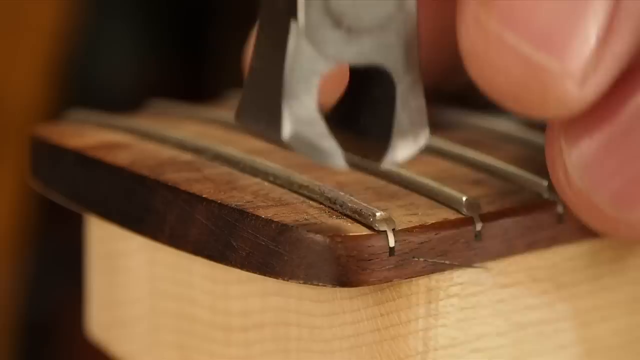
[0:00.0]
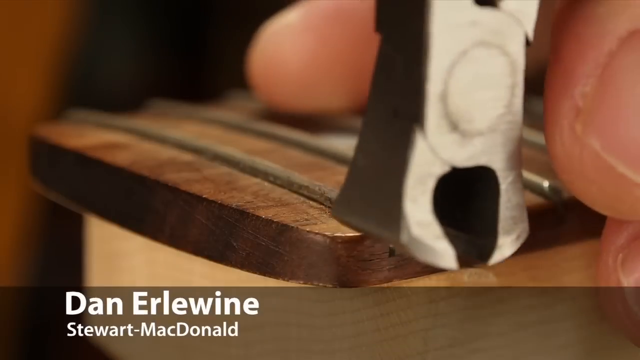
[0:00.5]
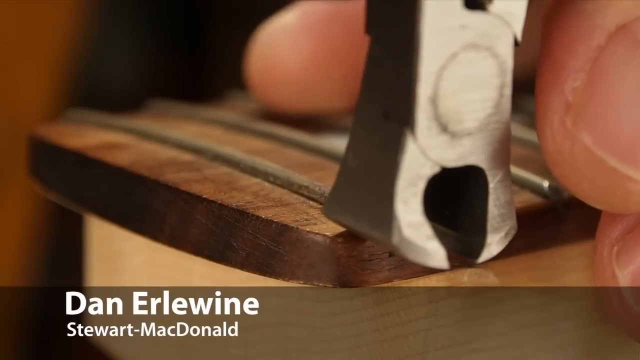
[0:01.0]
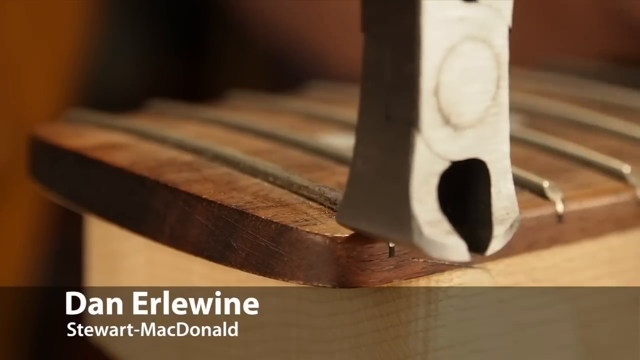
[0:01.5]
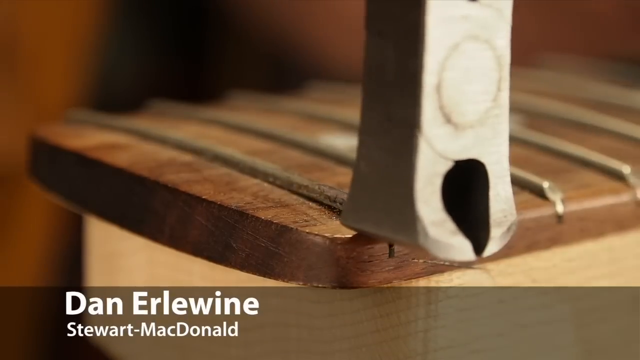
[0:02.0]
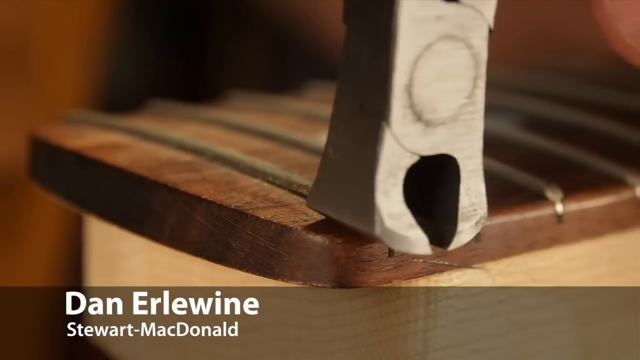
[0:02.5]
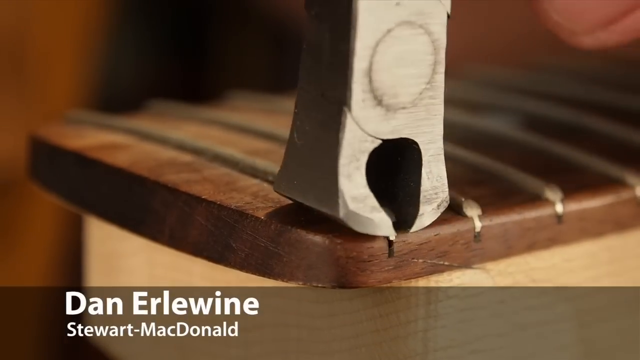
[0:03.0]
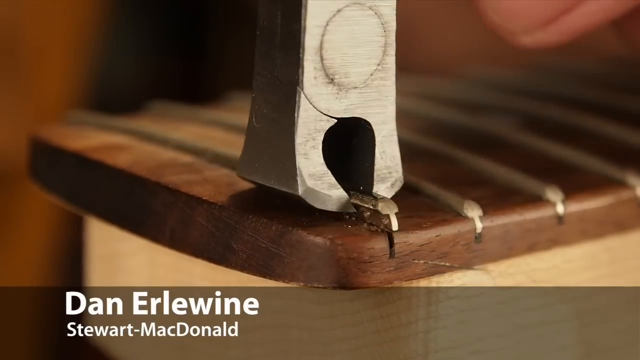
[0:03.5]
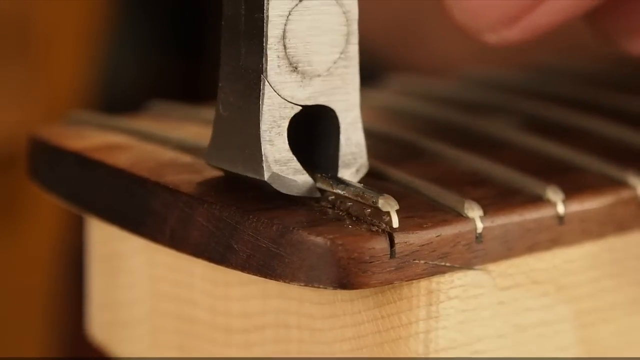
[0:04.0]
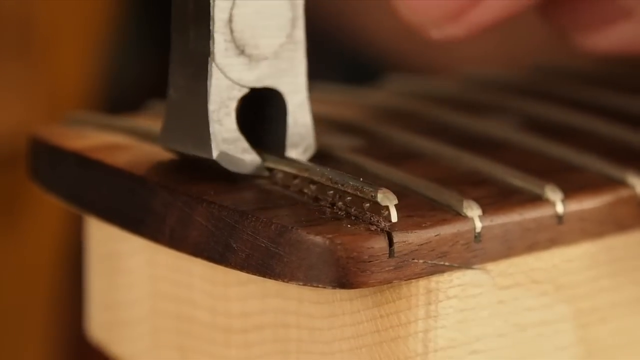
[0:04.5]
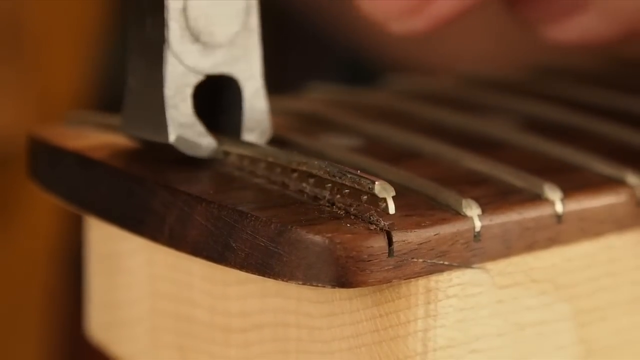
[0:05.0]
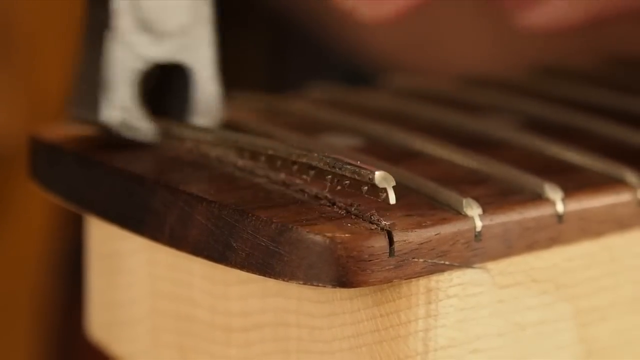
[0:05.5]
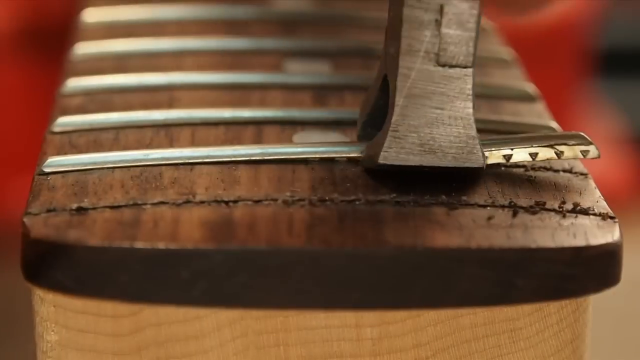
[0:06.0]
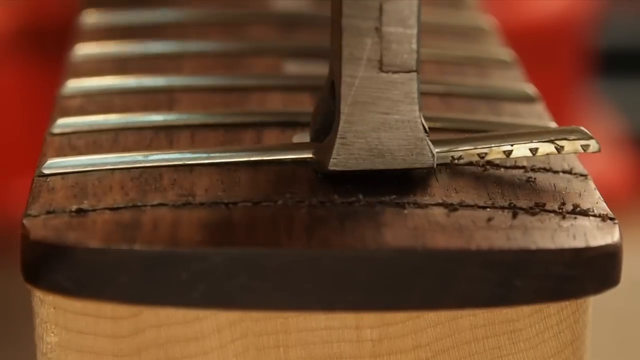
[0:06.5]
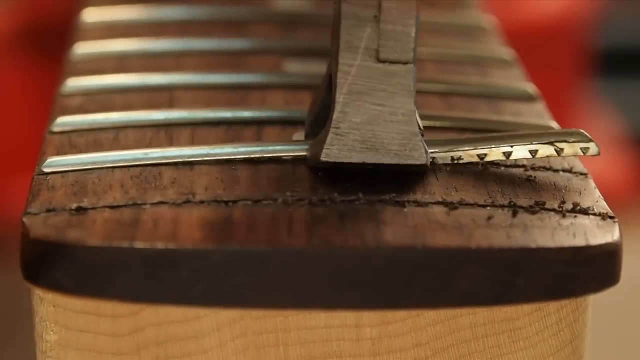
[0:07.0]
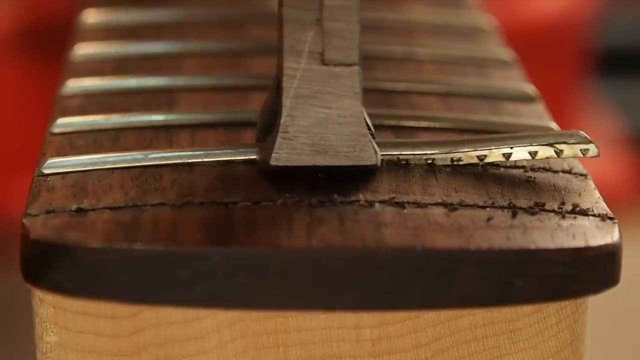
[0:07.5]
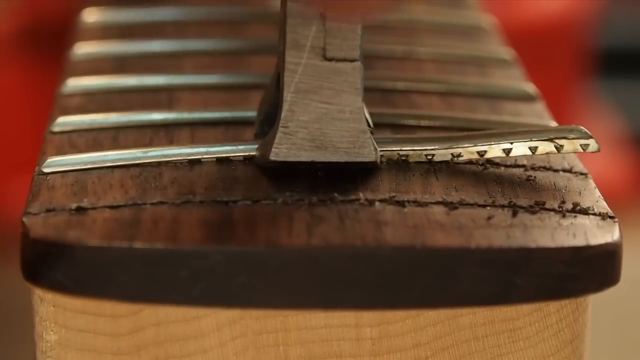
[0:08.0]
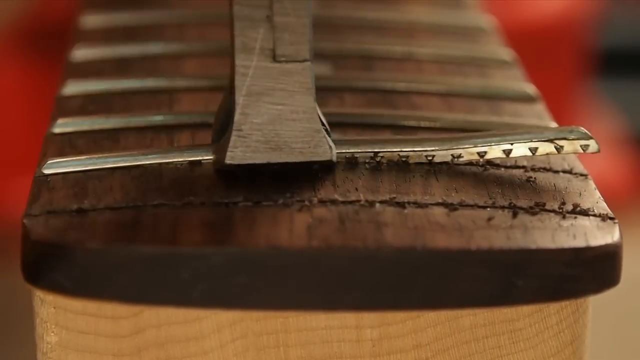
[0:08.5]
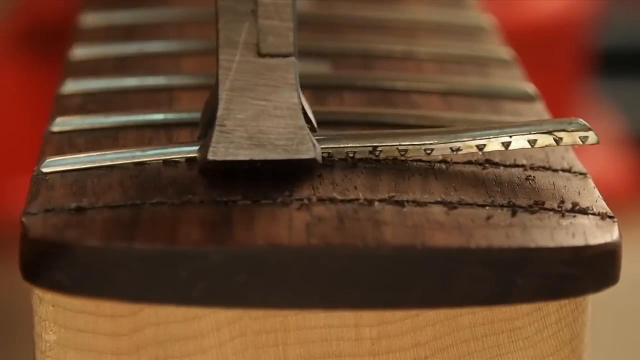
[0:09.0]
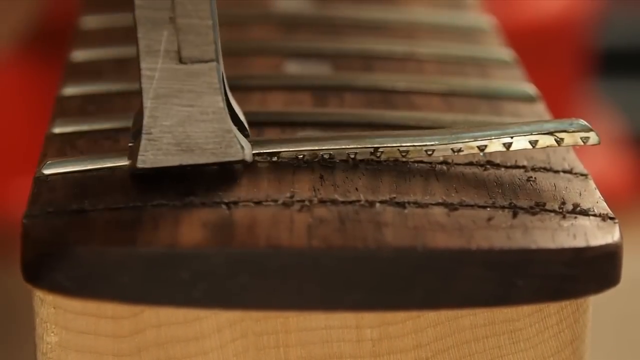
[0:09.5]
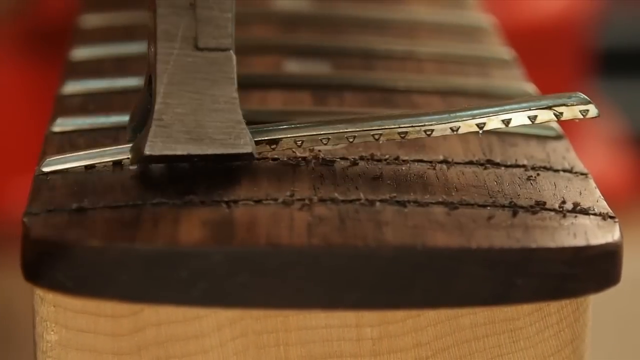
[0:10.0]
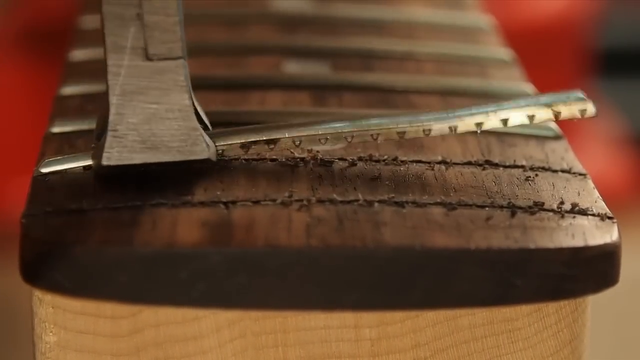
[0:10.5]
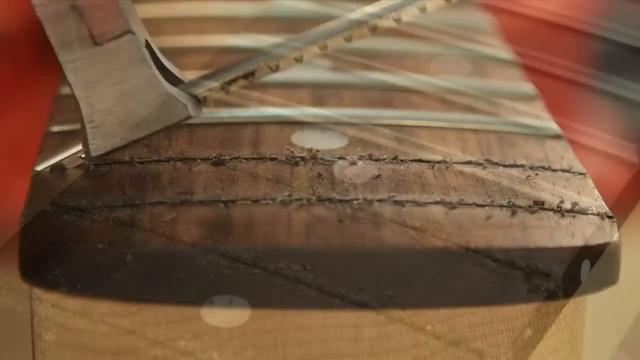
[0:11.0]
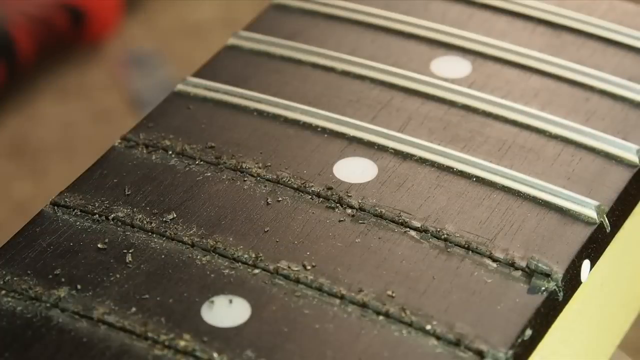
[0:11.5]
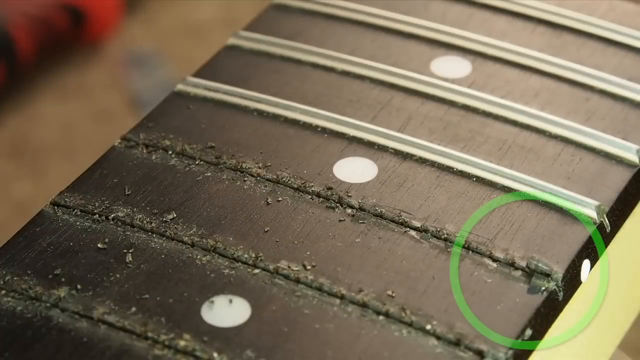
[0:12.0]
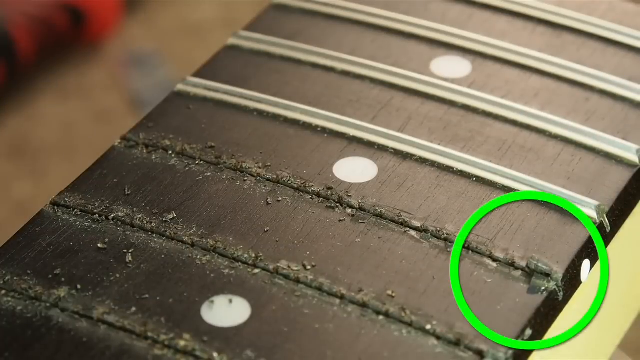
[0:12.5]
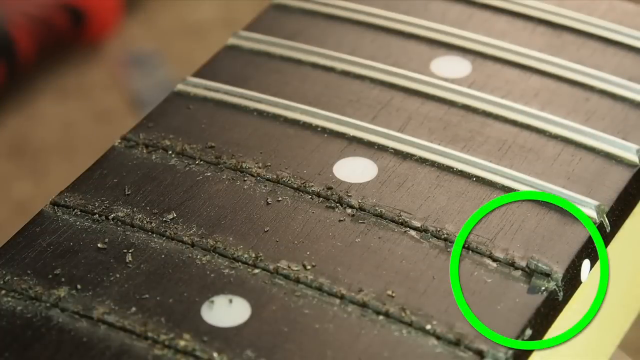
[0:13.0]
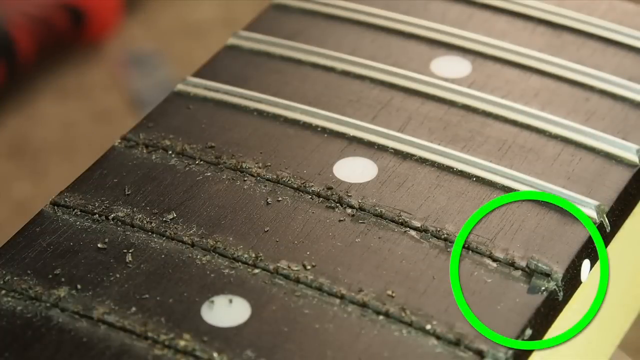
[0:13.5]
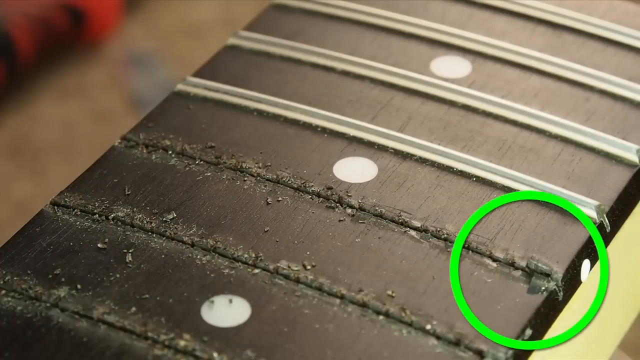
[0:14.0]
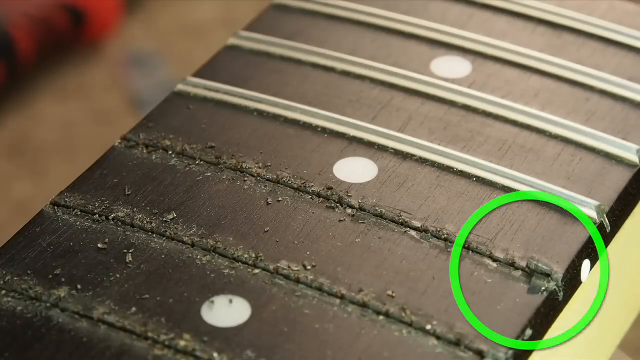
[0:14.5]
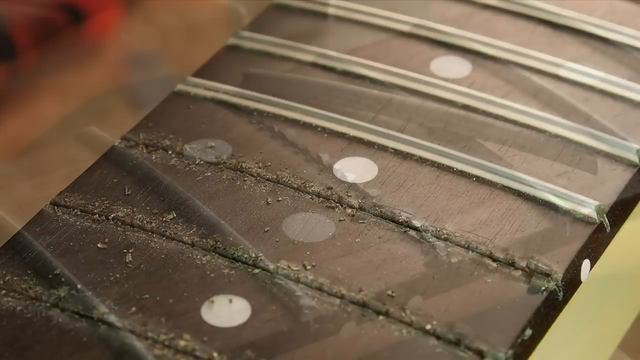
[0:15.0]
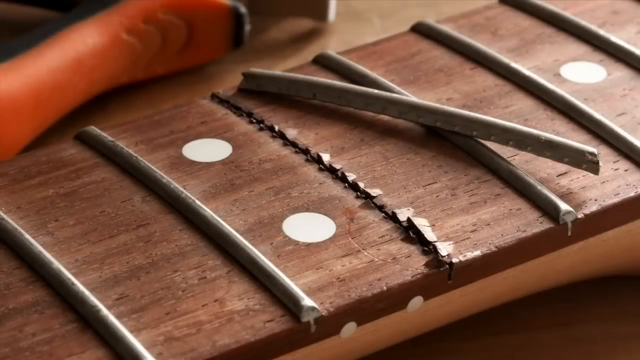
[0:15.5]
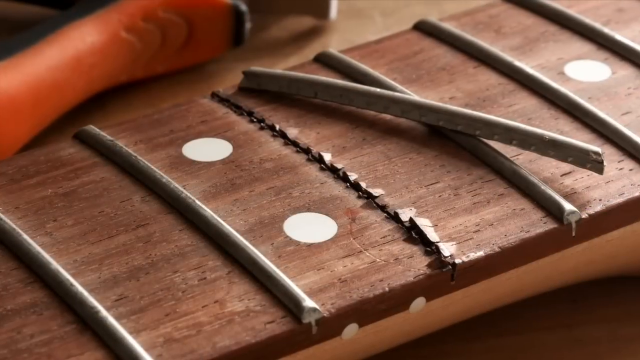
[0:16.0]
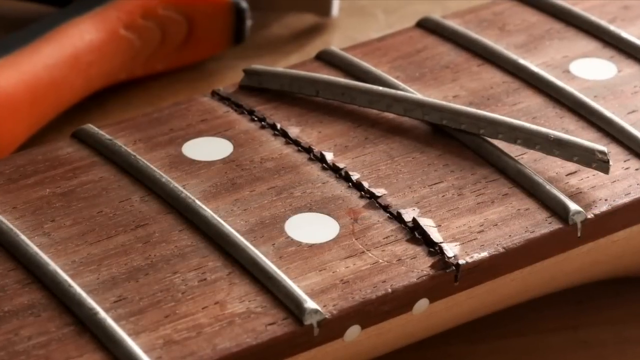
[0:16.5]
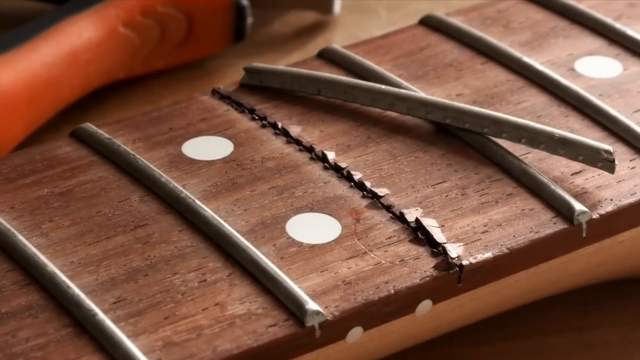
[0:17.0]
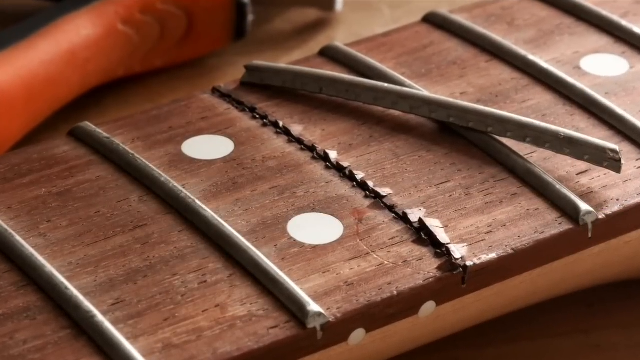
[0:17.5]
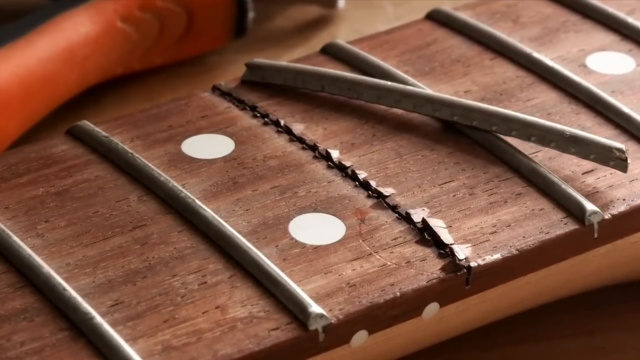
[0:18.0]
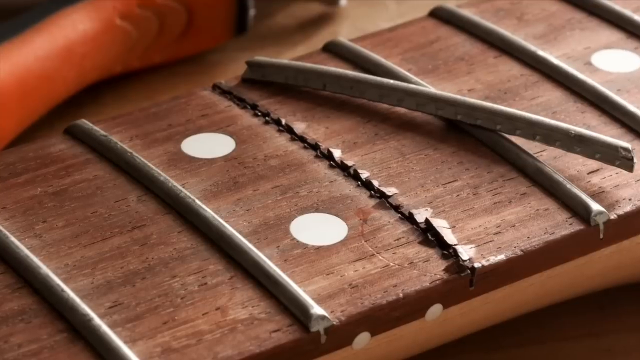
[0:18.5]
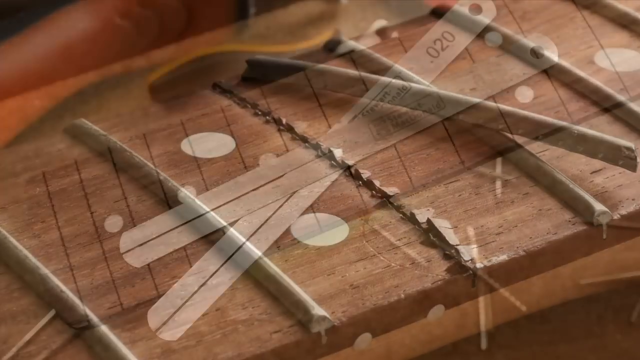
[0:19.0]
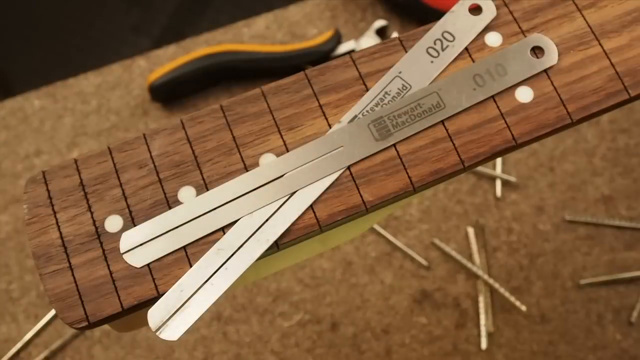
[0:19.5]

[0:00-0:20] A man removes metal things from a wooden thing. He uses some blades and a big tool to take off the metal things that are attached to the wooden piece. His name is shown at the beginning of the video. Where the metal things have been taken off, some lines are visible, and sketches are left behind on the wood.